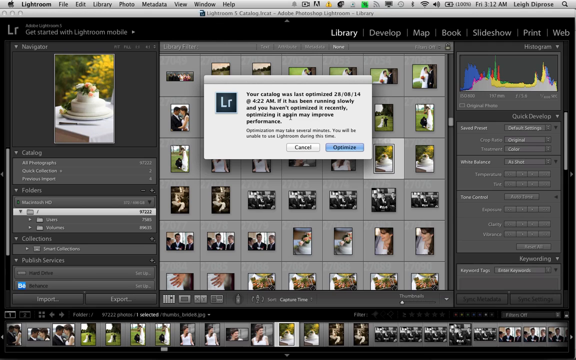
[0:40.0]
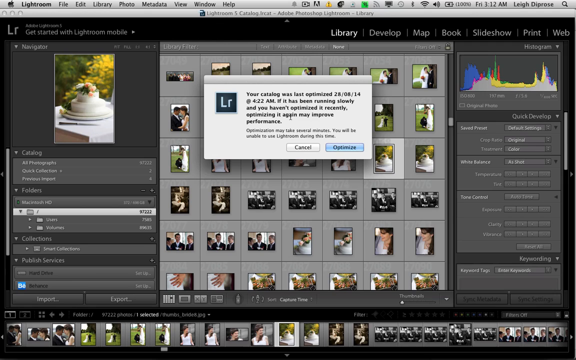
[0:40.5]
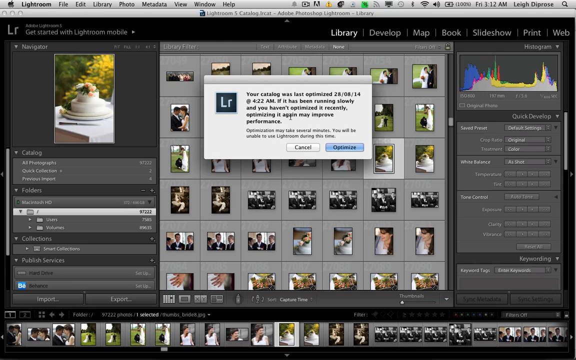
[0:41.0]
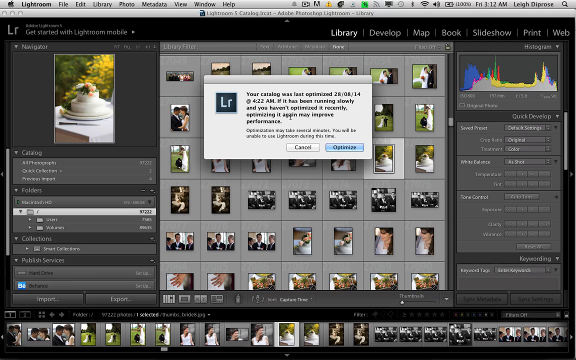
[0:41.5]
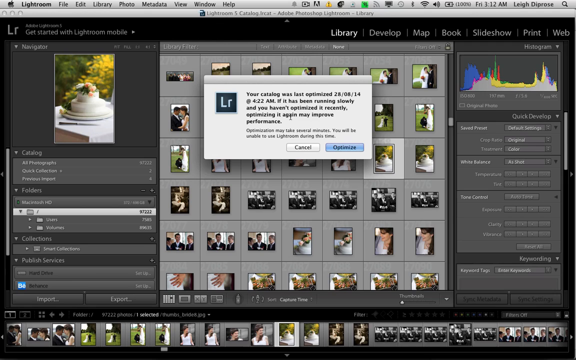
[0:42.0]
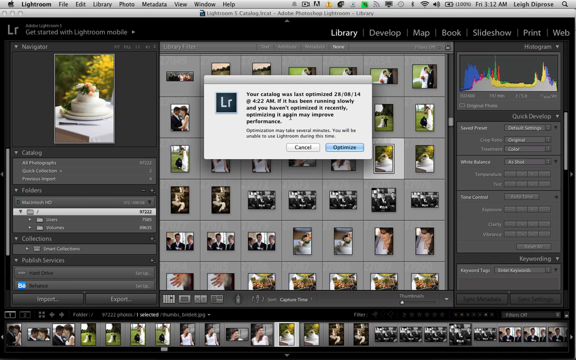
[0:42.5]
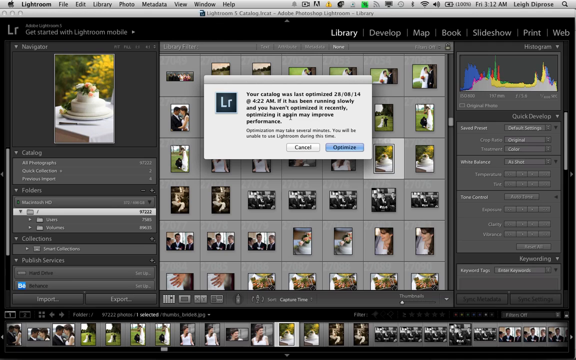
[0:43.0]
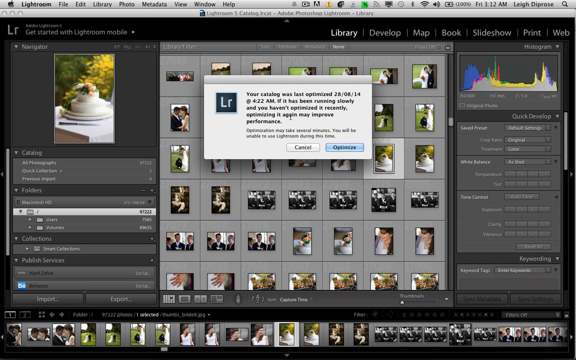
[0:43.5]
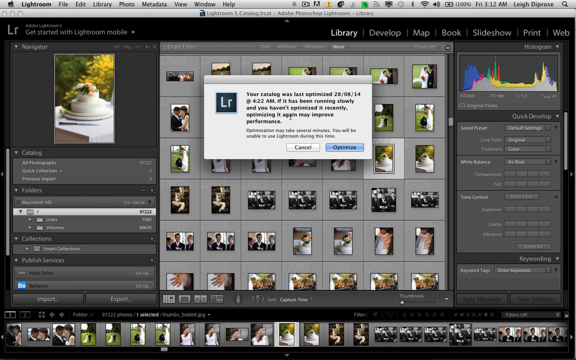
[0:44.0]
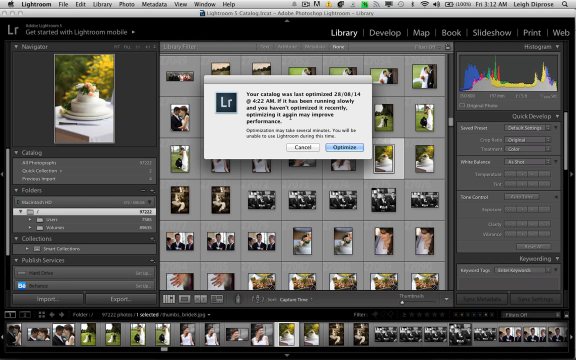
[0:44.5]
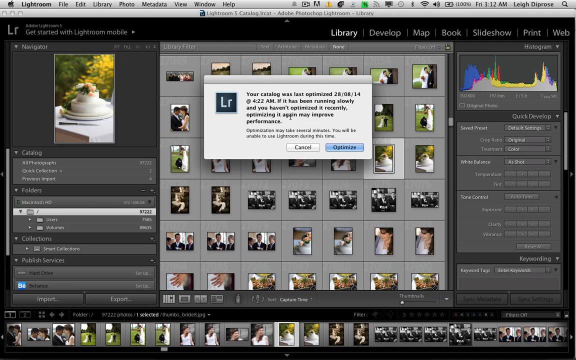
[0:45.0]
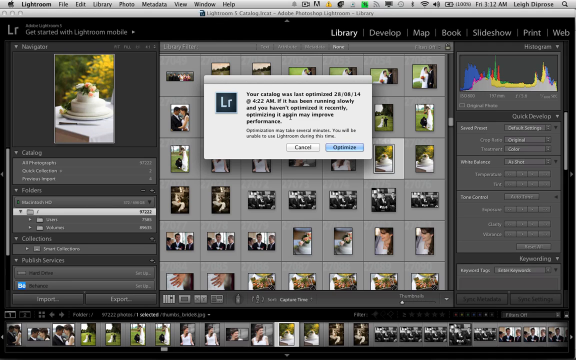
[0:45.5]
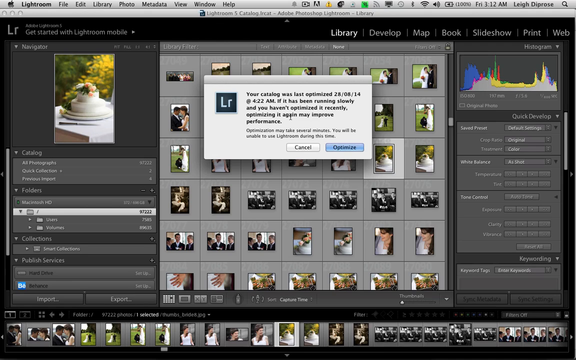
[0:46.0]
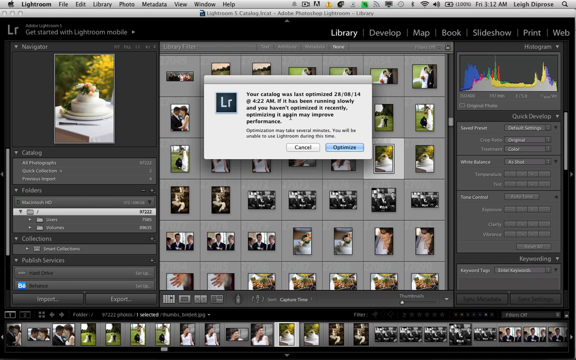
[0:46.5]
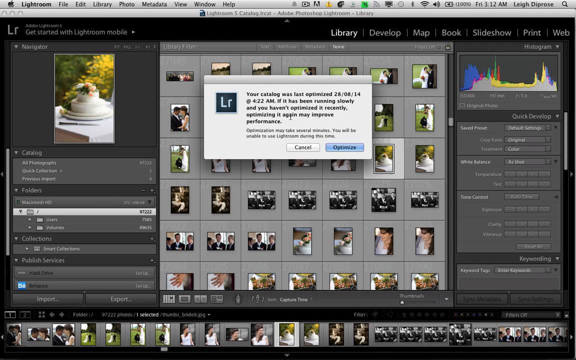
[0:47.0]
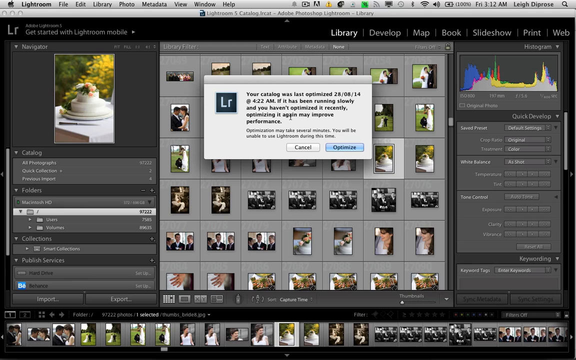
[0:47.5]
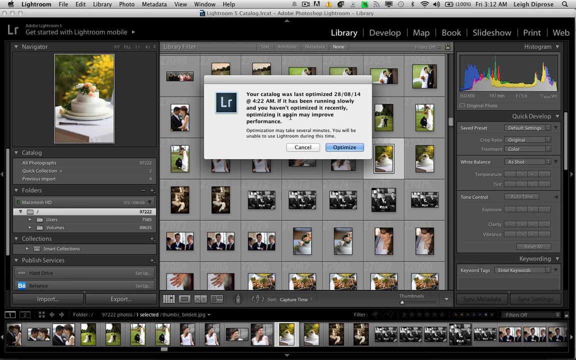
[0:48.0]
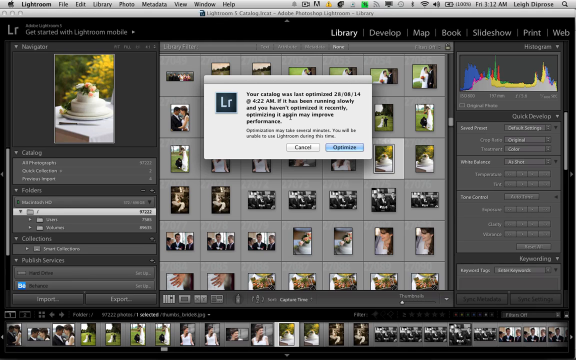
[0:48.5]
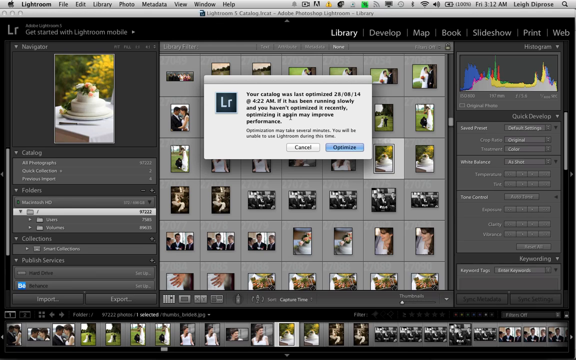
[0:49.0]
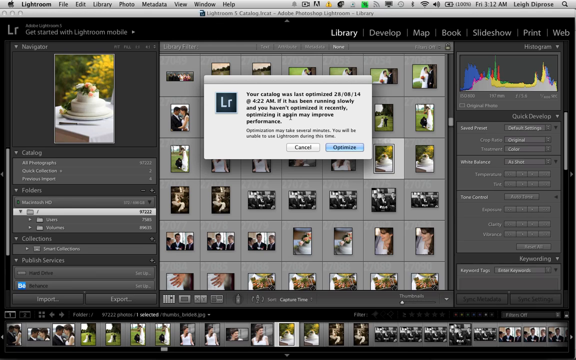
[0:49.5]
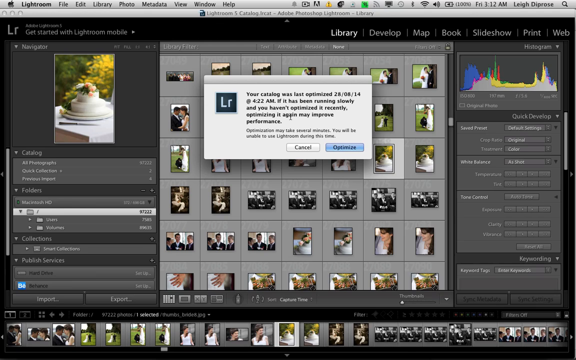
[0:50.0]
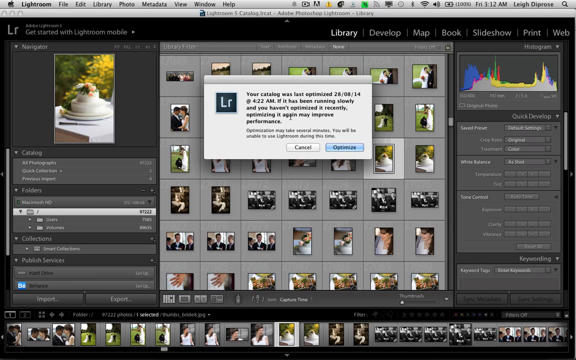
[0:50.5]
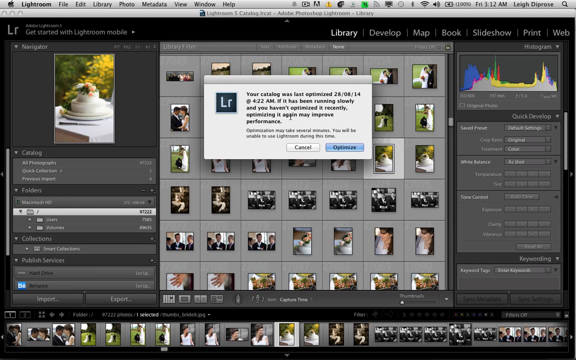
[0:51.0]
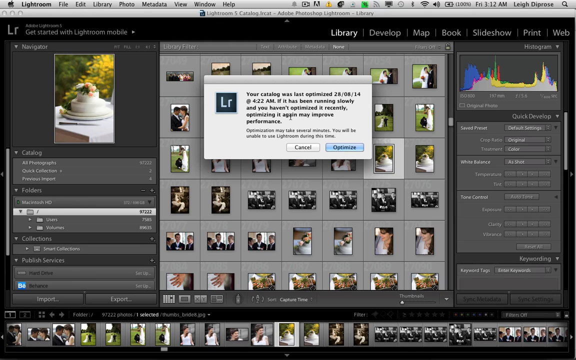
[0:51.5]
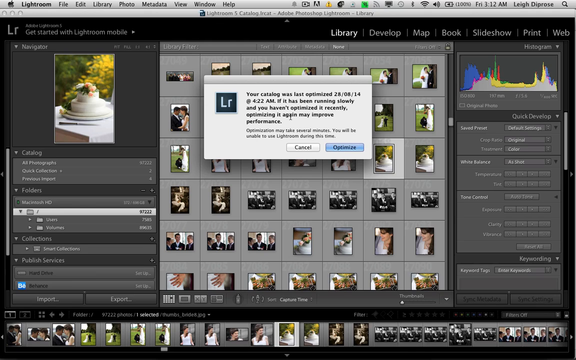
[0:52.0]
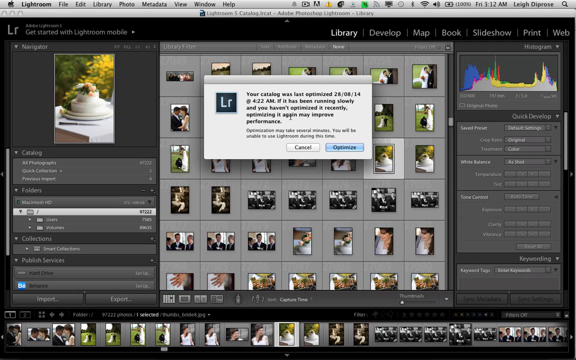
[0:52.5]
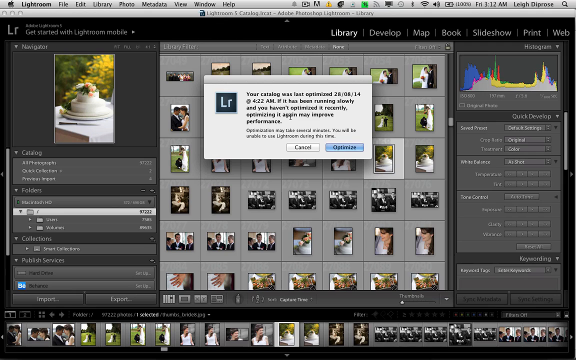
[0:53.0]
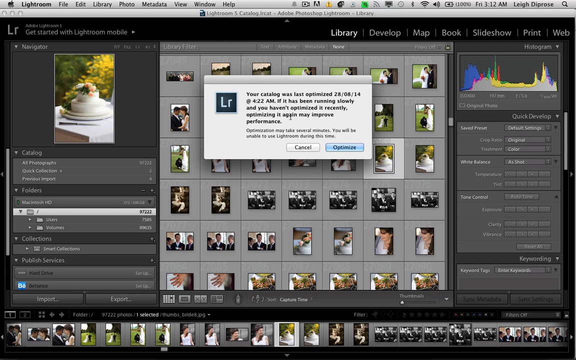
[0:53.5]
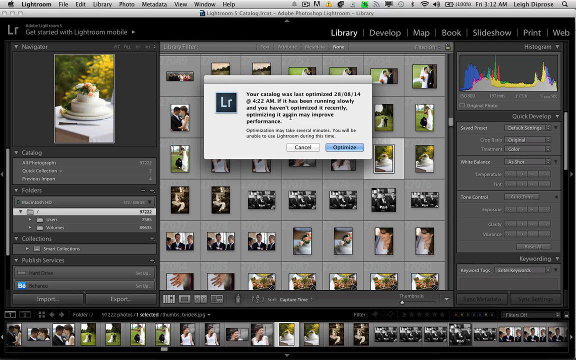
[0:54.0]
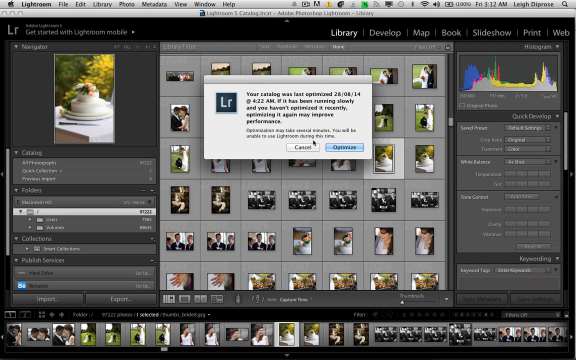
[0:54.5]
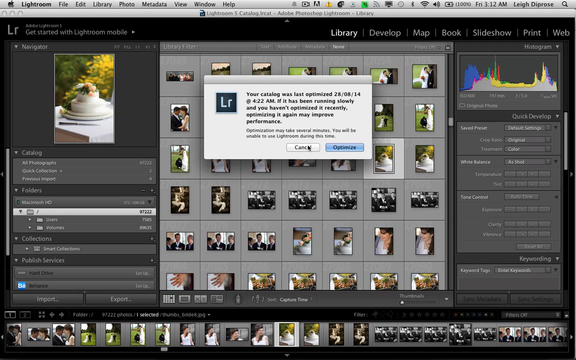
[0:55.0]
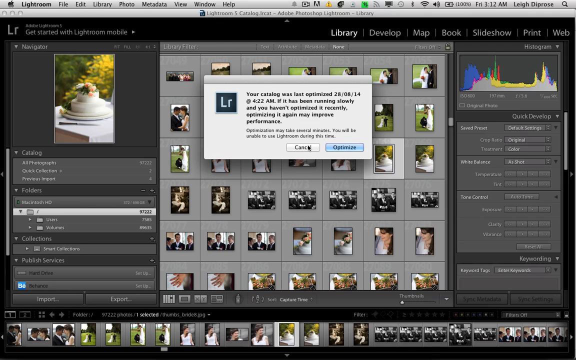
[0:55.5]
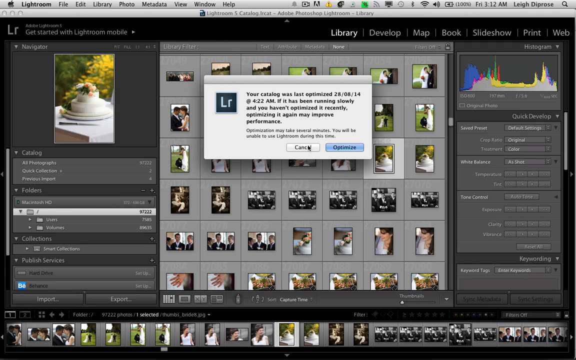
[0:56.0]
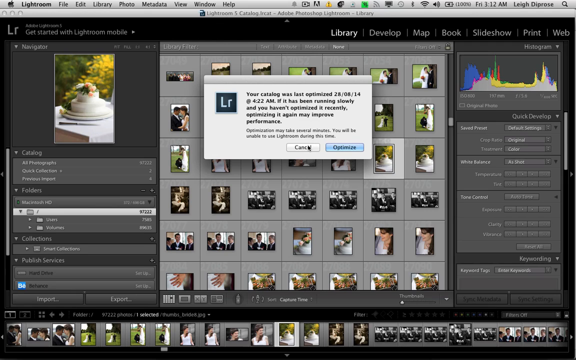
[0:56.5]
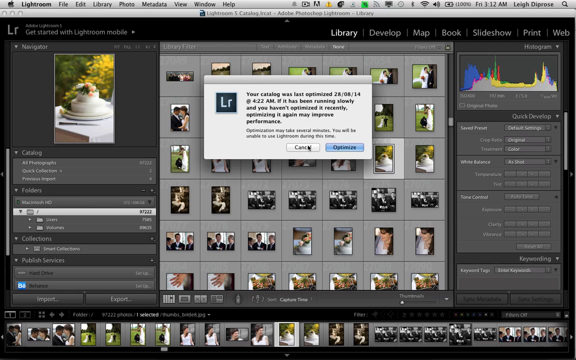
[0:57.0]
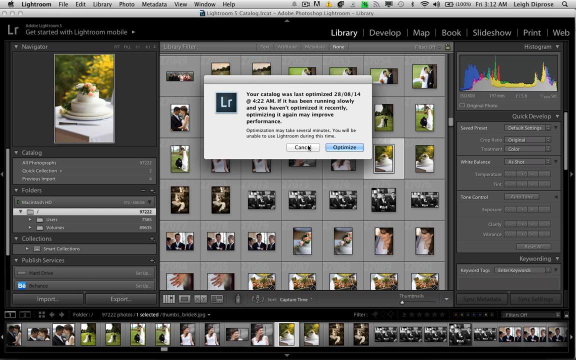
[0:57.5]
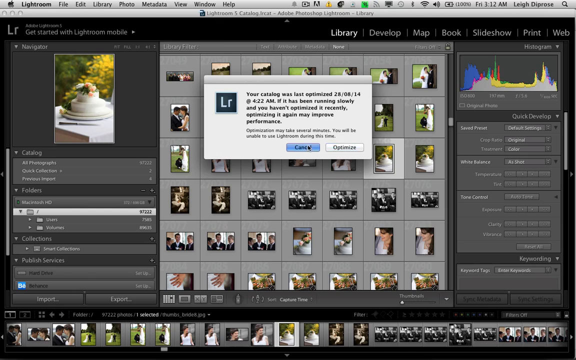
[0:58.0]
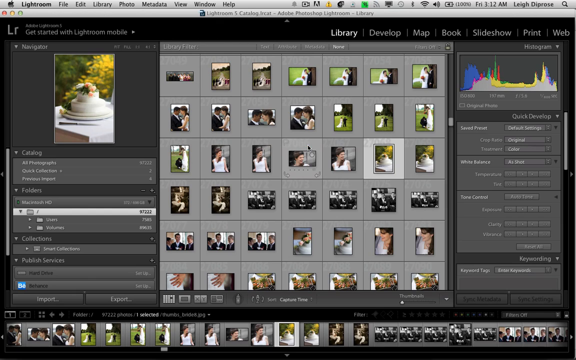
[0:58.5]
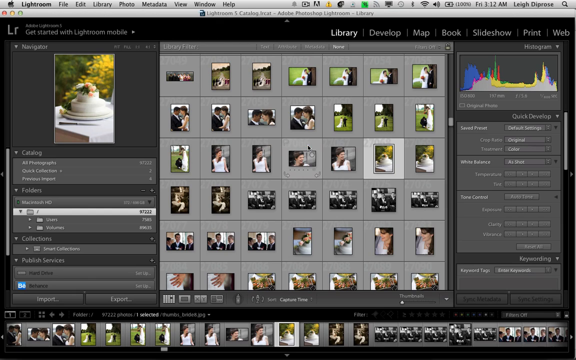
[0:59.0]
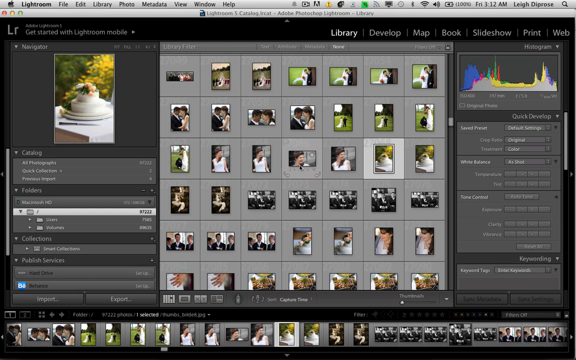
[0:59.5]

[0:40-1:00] The screen is a laptop on an old desktop, with pictures on it: a white cake, a bride and a groom. The groom and his groomsmen, who are white people, wear black suits. One picture is taken in the garden, with a green lawn in the background, and there are pictures of the guests, friends and family. Another shows the groom and the bride holding each other and hugging, and there is a picture of the groom. The cake is small and white with yellow and peach flowers on top.